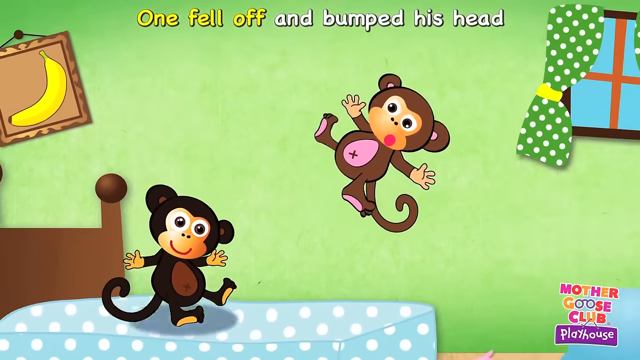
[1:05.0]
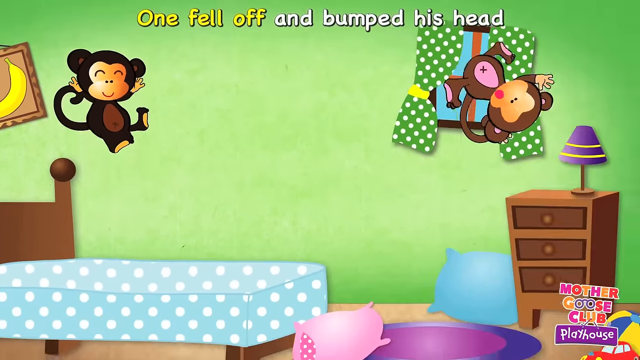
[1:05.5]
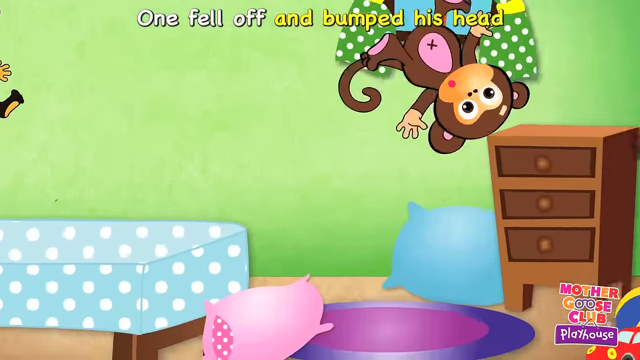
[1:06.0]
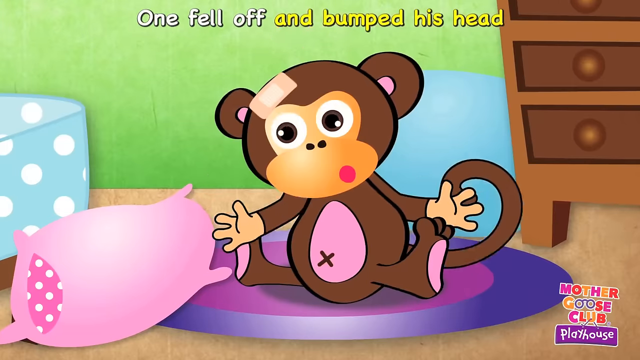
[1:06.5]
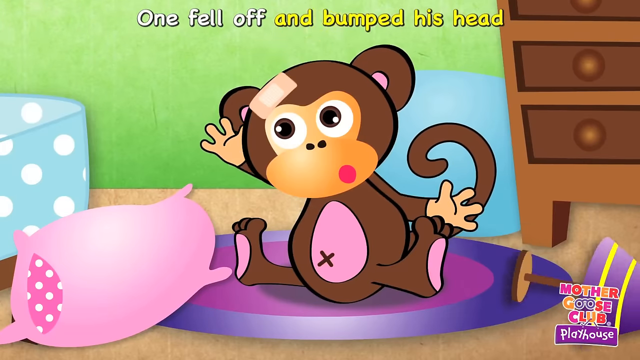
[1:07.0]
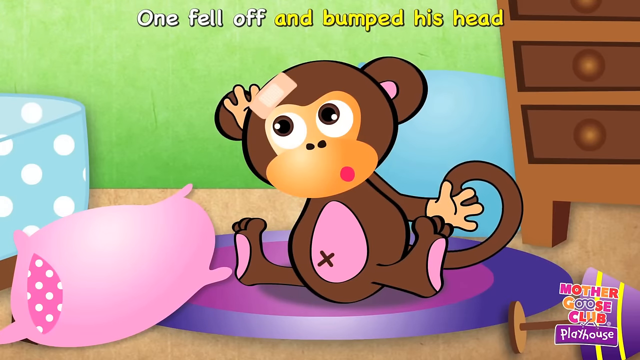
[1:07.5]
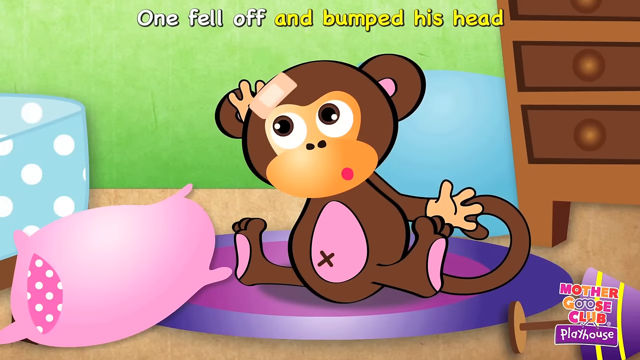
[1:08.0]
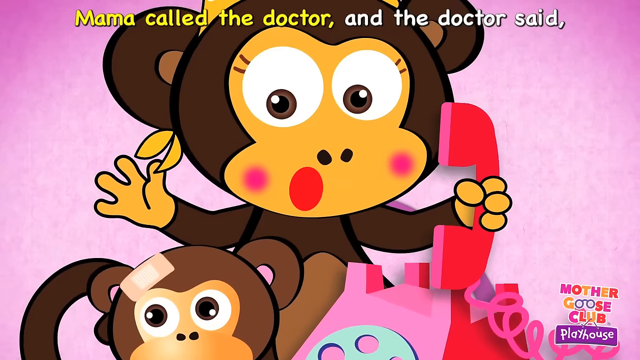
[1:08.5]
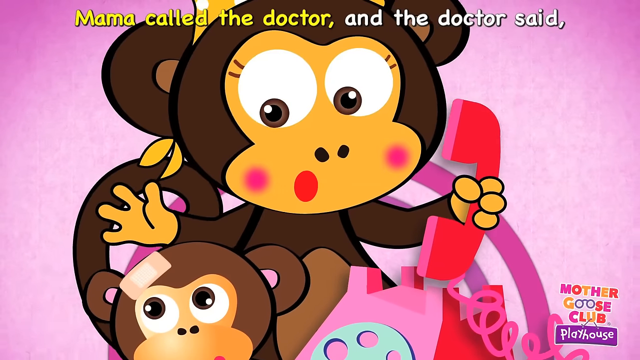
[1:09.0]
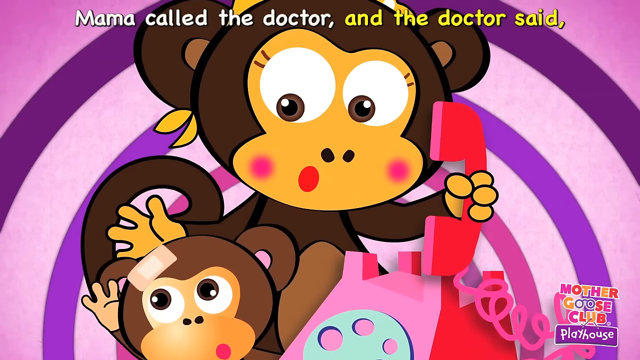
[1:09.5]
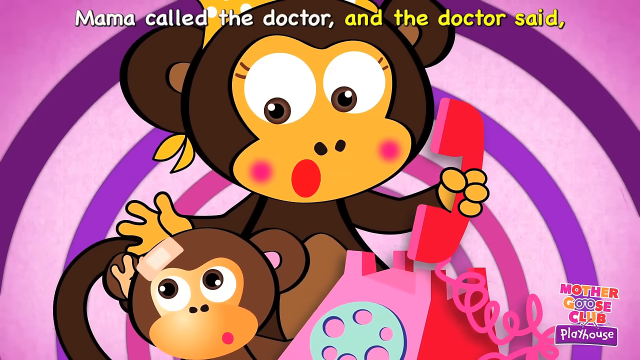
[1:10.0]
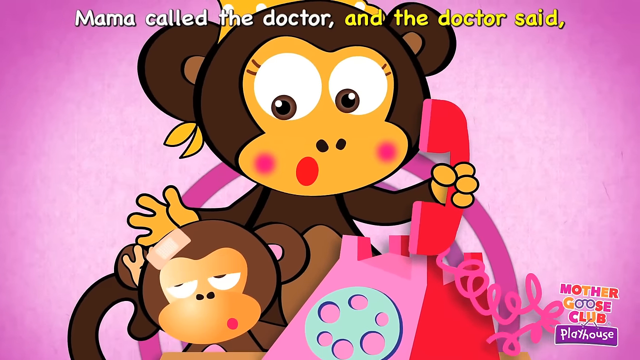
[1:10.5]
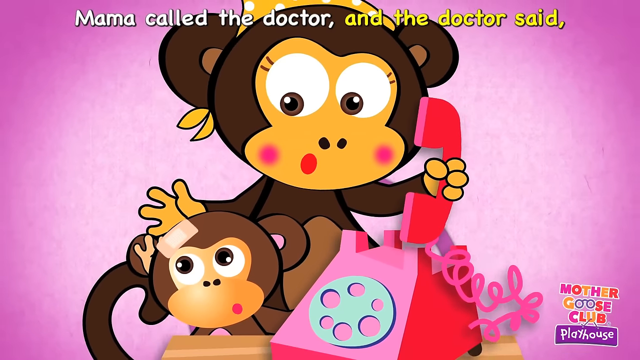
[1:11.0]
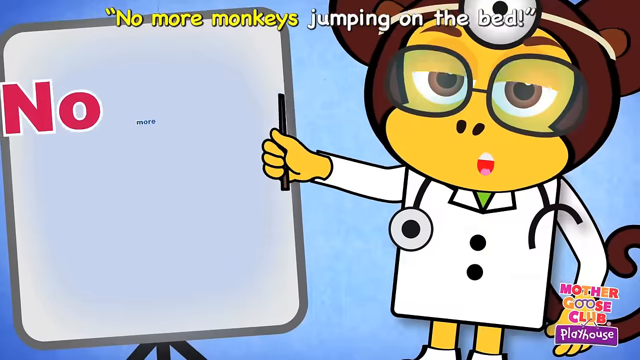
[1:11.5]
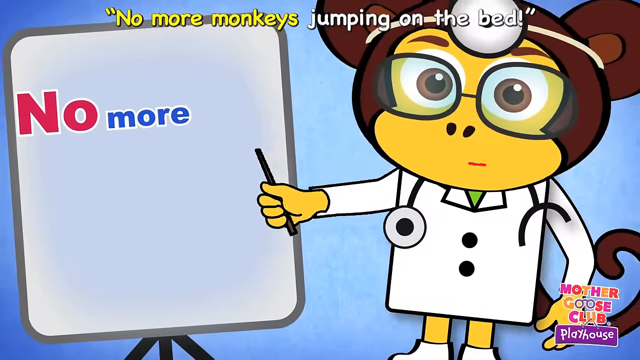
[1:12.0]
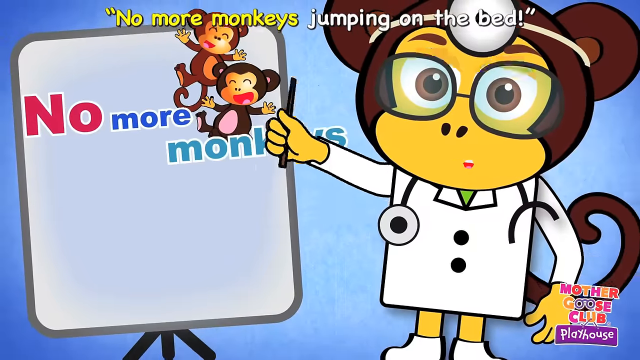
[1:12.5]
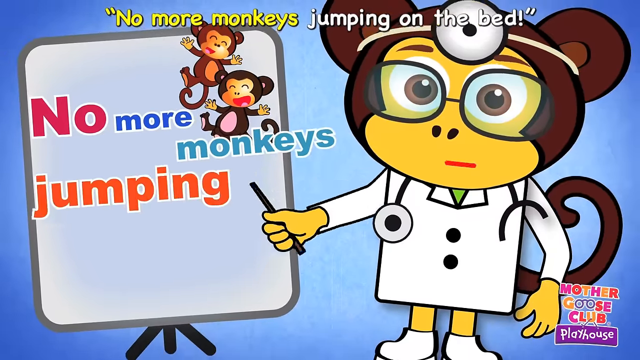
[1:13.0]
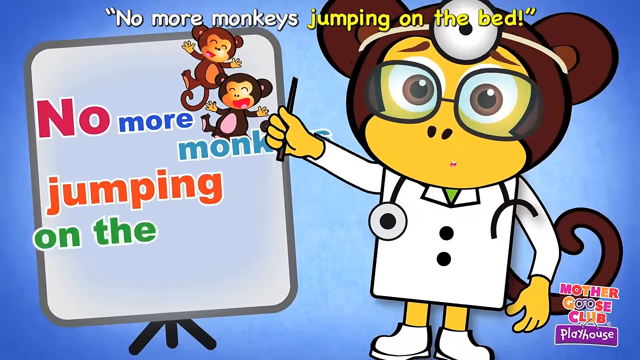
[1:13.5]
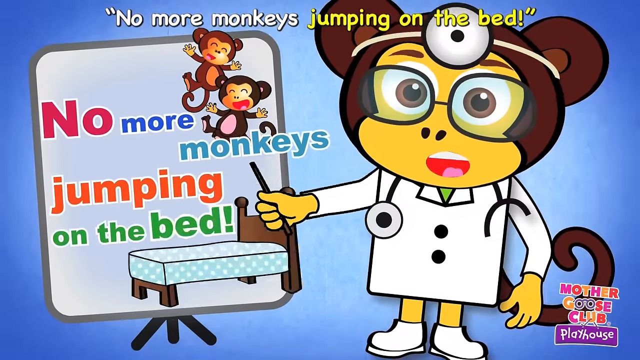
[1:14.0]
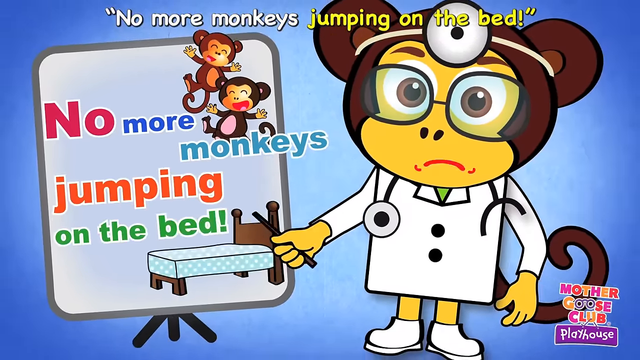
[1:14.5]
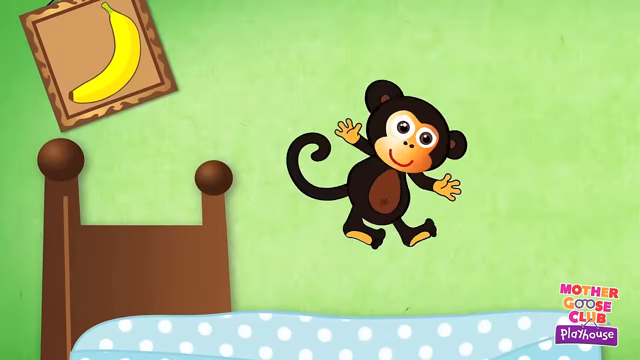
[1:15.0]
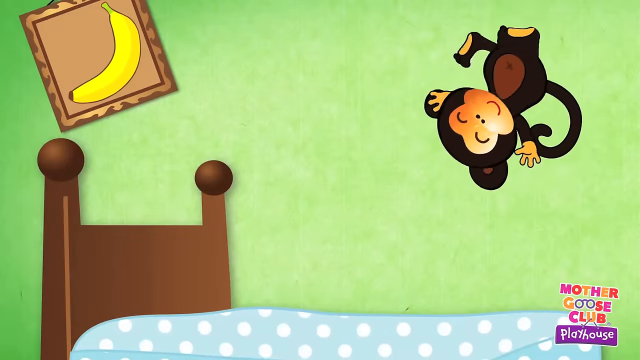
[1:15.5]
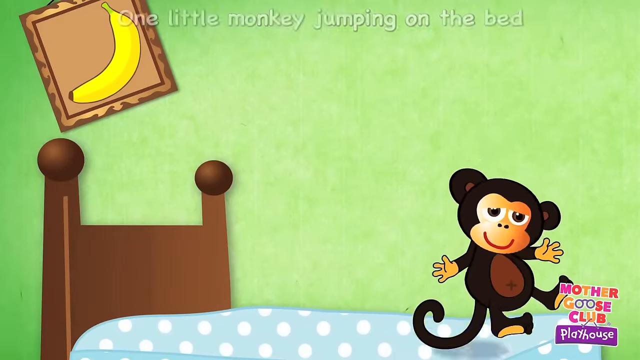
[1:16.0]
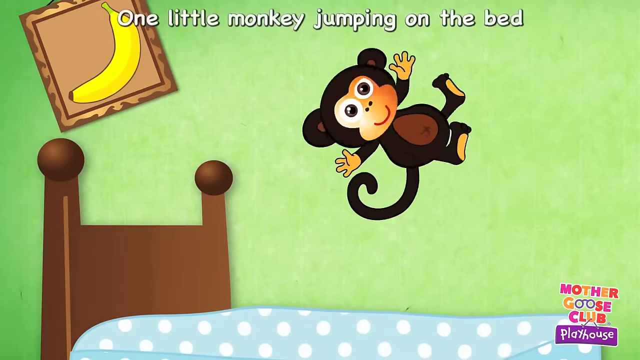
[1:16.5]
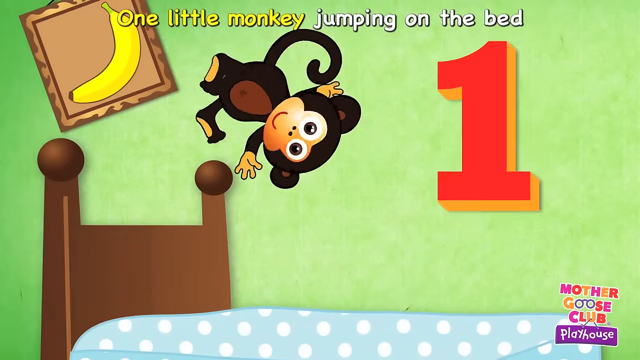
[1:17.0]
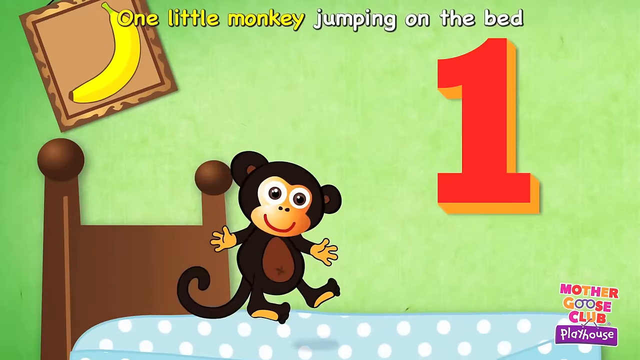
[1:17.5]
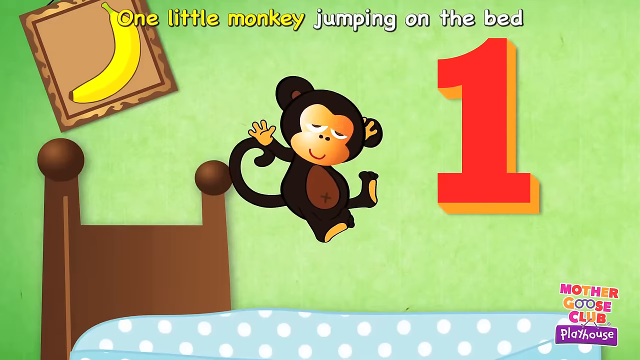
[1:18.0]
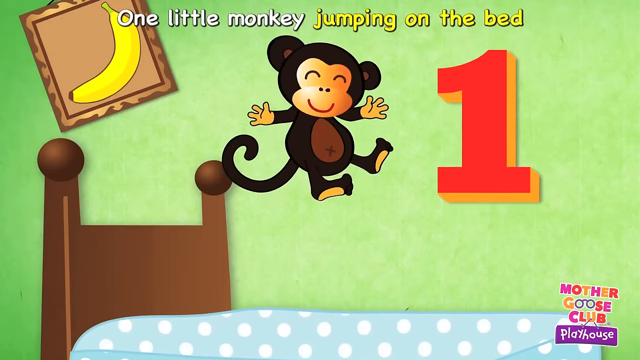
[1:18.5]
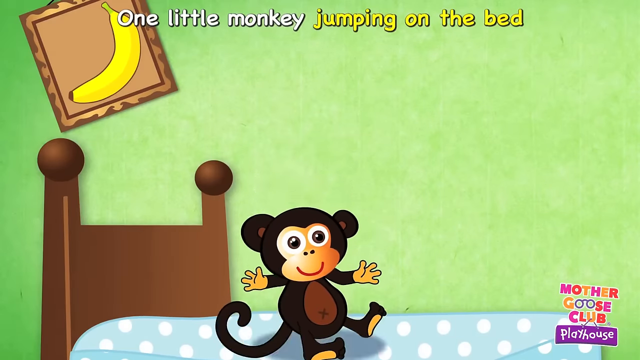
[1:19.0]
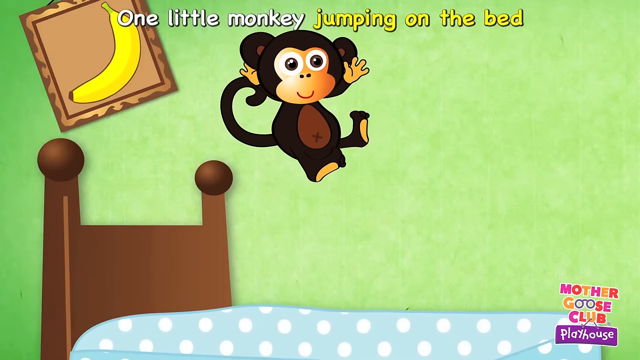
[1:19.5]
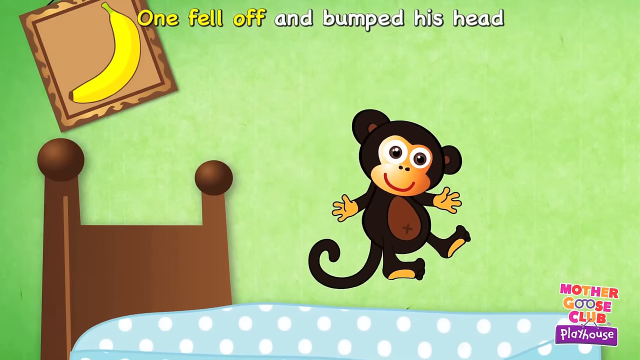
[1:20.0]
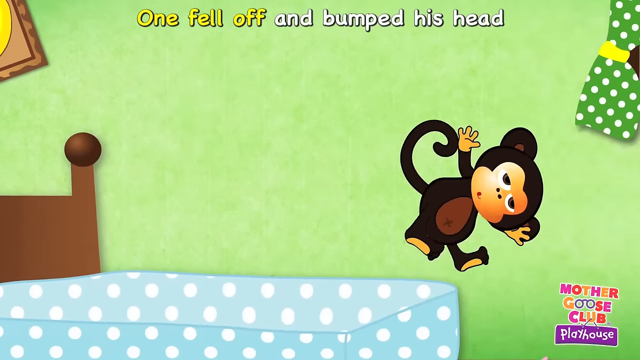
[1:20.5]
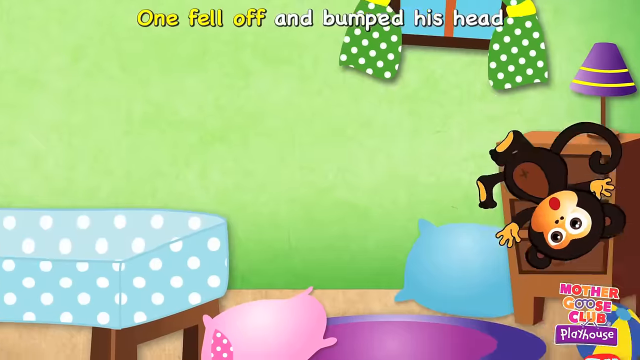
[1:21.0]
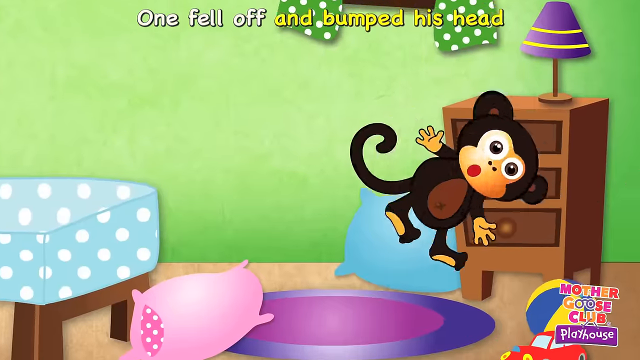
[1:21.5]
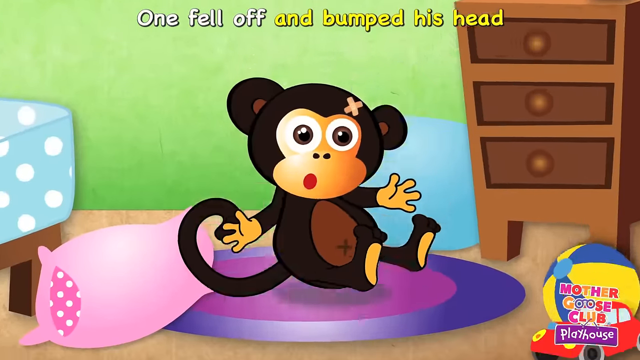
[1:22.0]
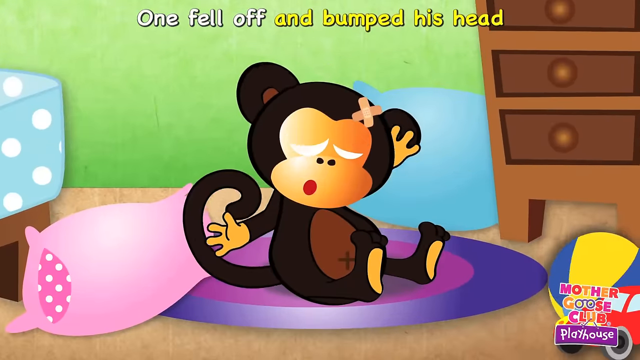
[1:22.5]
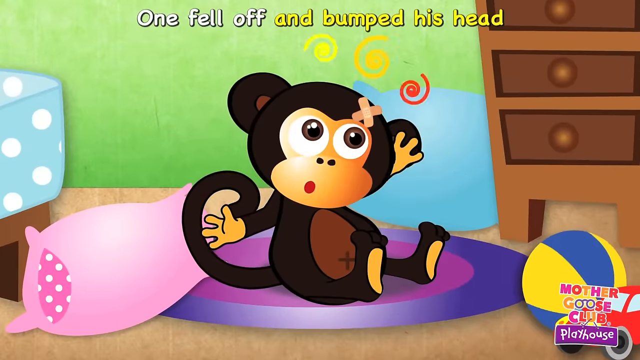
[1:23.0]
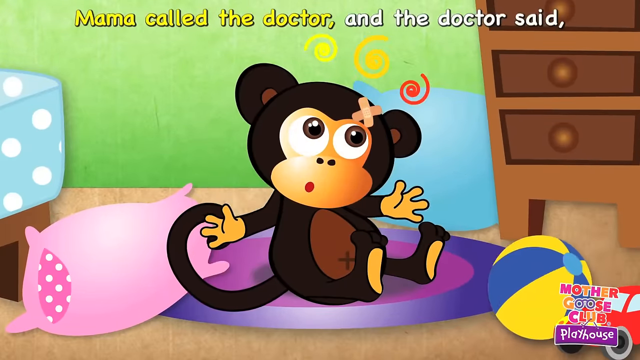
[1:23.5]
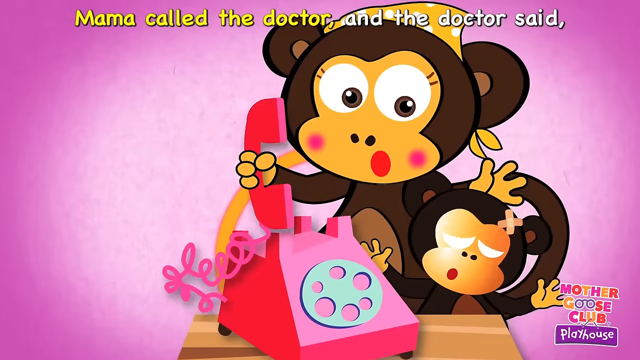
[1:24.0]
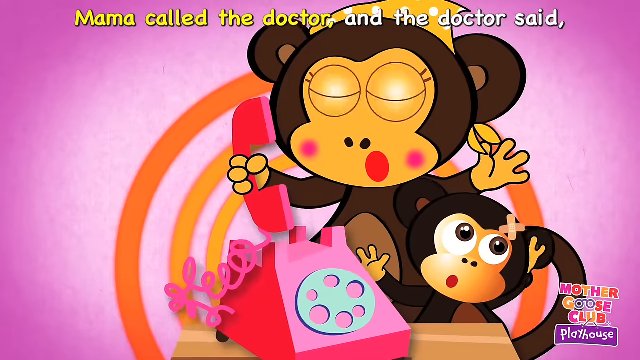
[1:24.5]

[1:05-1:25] A monkey with a pink belly and pink ears falls off the bed and hits the lamp, which has a purple lampshade and falls off the table. The doctor has kind of a tripod white board with "no more monkeys jumping on the bed" on it, and holds a little pointer in her right hand, pointing at the board; the board shows a picture of the monkeys in the upper right and the bed in the lower right. A solid black monkey with a solid brown belly and no ear coloring jumps, falls off, and hits its head on a blue and yellow ball that is new to the picture, getting two band-aids on its head. A brown monkey falls off, with a band-aid on the viewer's left, its right. Stars and curlicues appear above the fallen monkeys' heads. A red car is on the ground by the ball. The concentric circles behind the mom are orange, and later kind of purplish-pink, going from small to big. The banana picture and the blue and white polka dots are still there, the carpet is the same, and the mom's headband appears to be the same color.